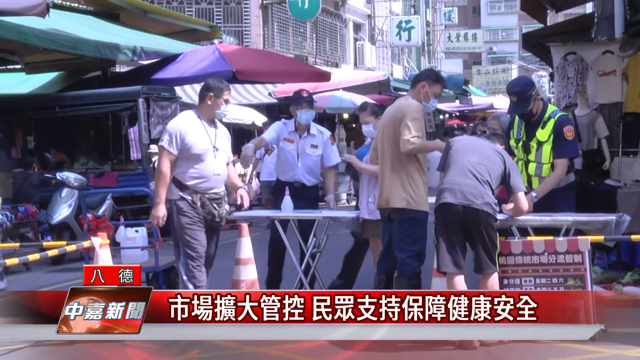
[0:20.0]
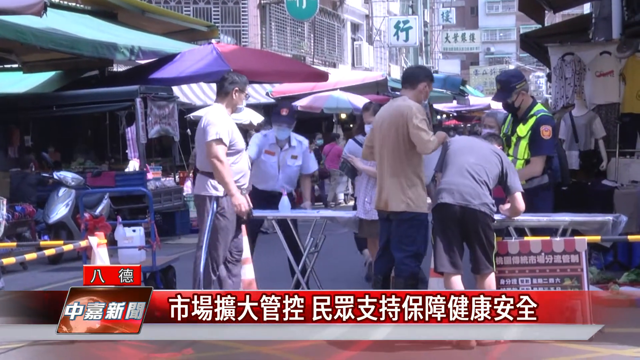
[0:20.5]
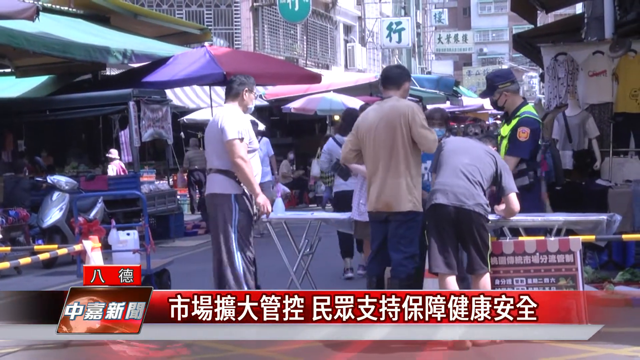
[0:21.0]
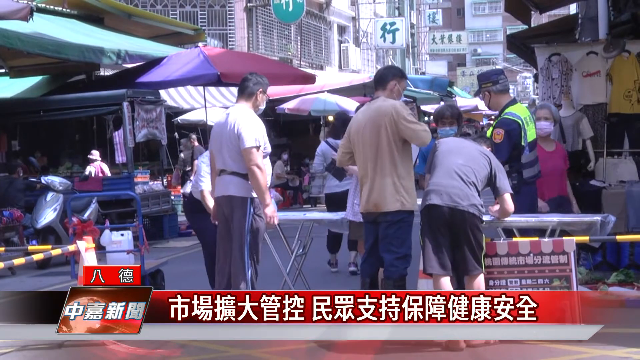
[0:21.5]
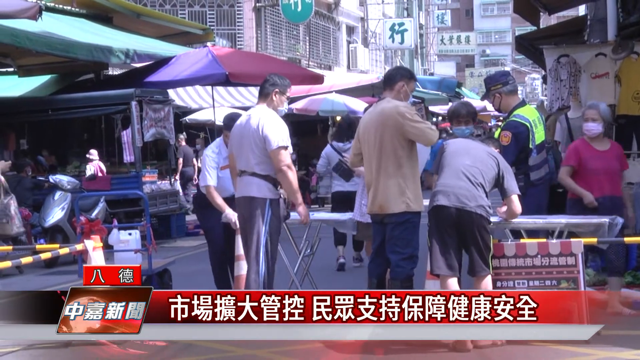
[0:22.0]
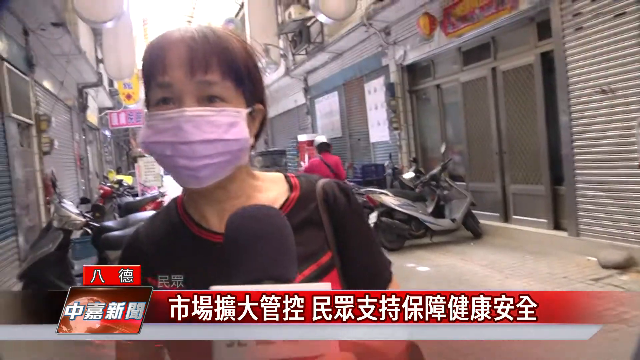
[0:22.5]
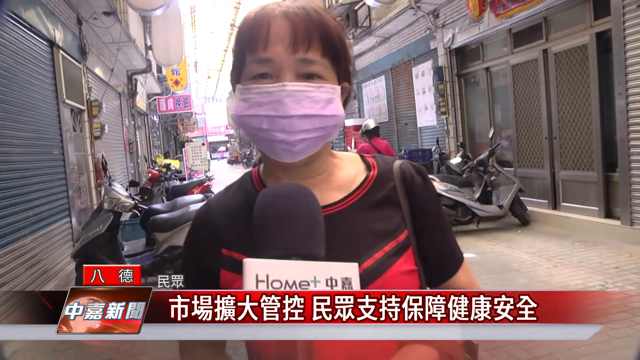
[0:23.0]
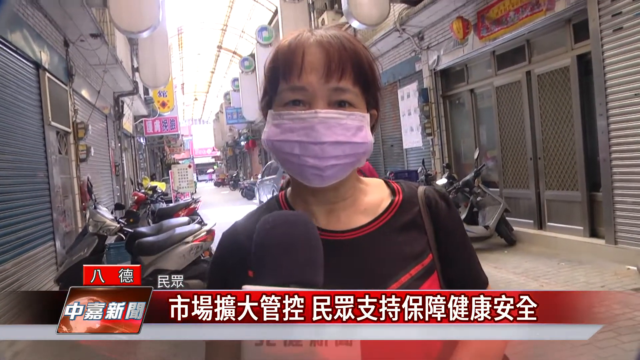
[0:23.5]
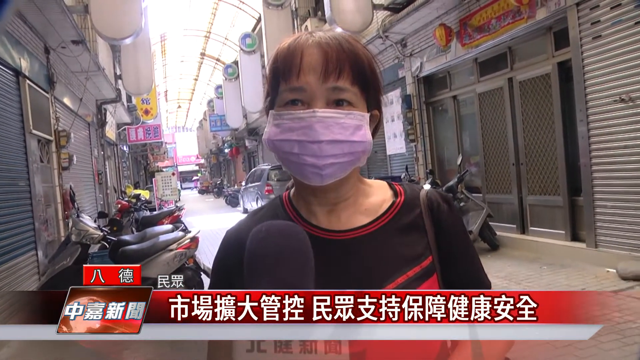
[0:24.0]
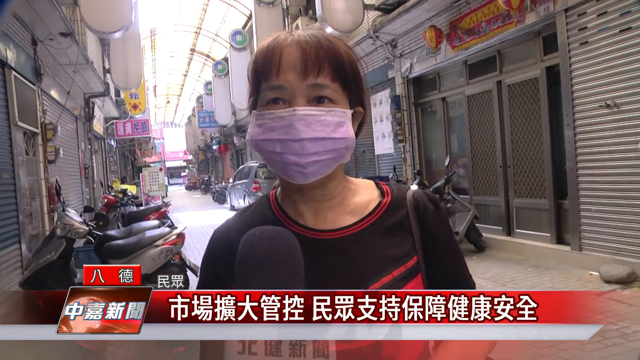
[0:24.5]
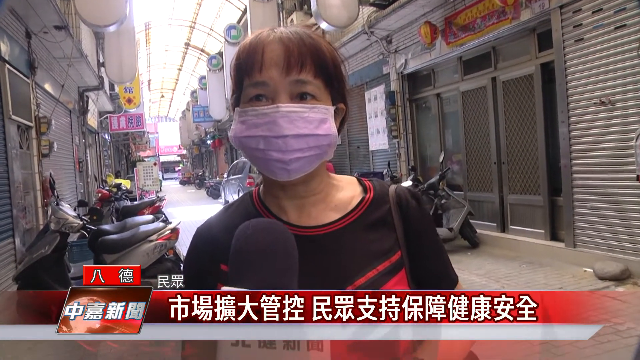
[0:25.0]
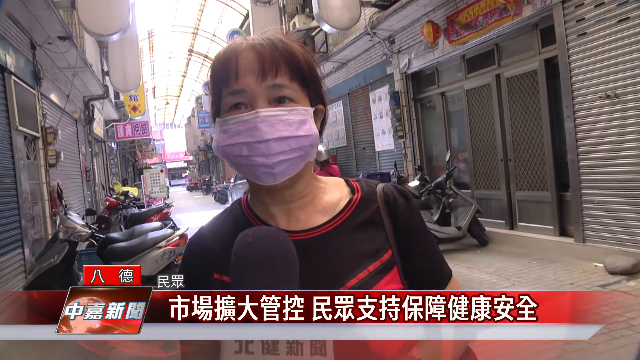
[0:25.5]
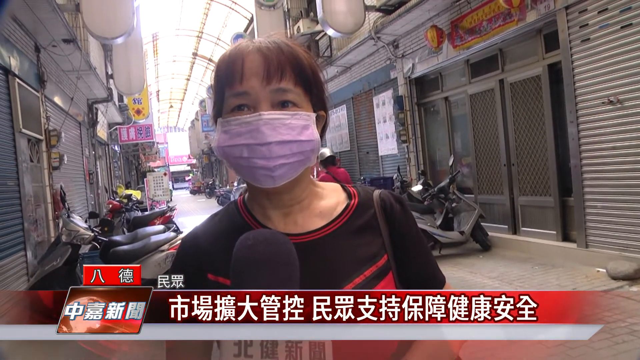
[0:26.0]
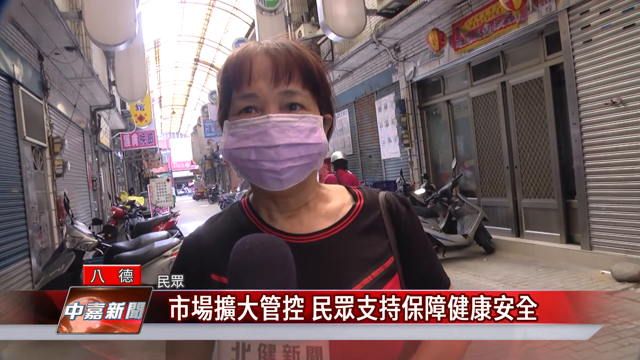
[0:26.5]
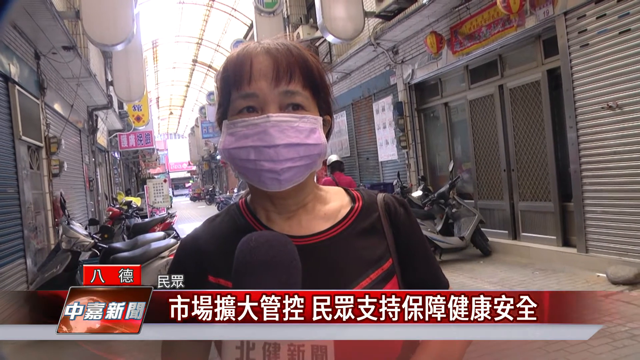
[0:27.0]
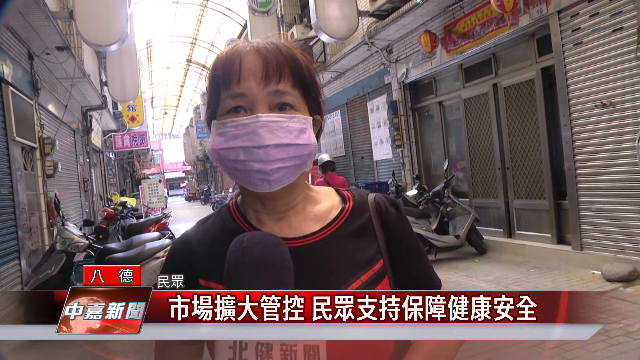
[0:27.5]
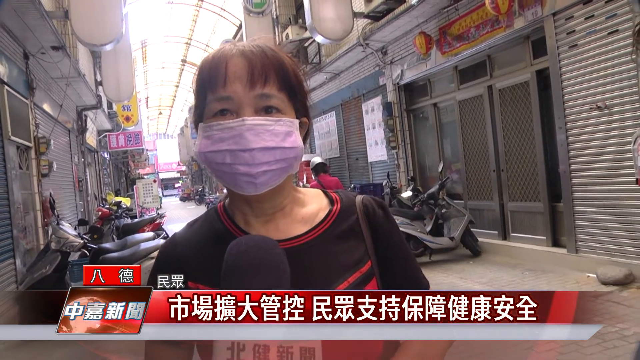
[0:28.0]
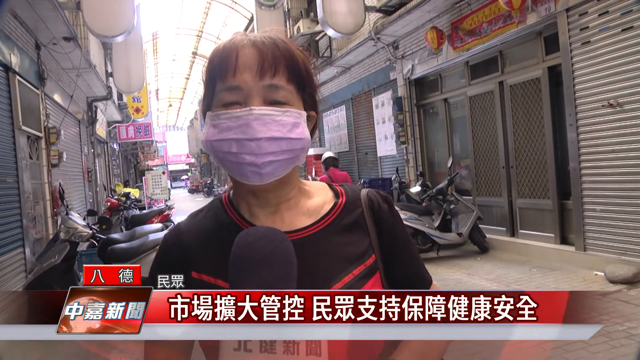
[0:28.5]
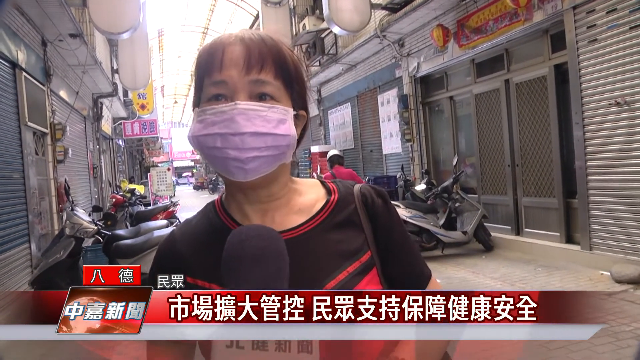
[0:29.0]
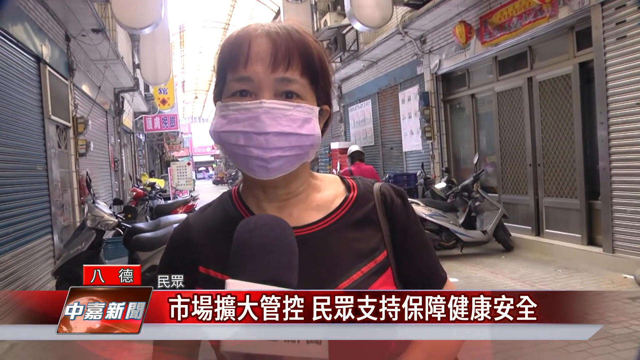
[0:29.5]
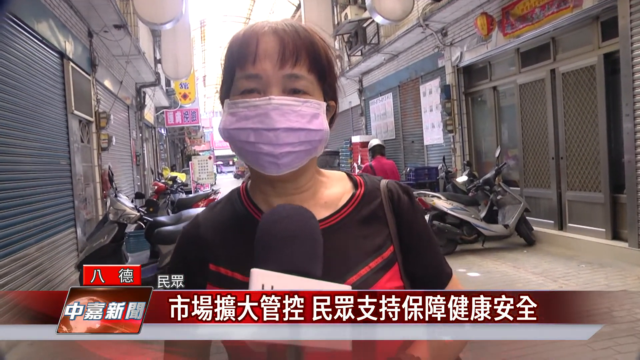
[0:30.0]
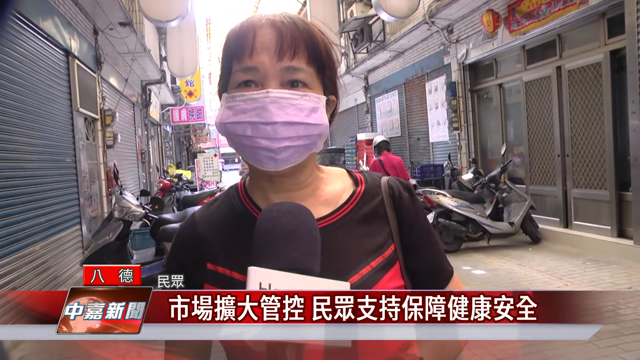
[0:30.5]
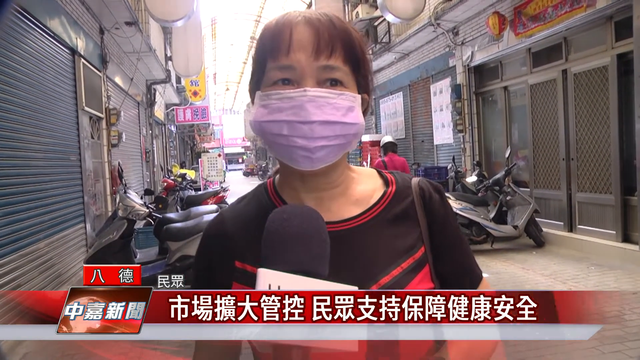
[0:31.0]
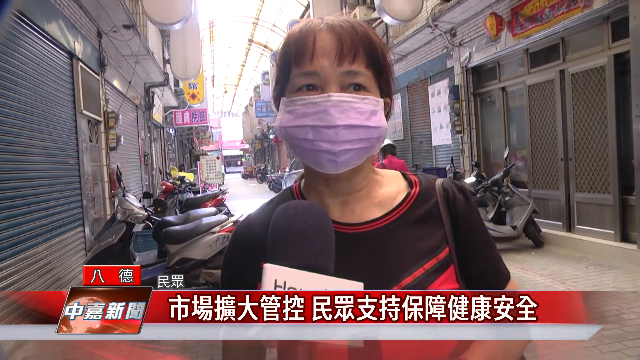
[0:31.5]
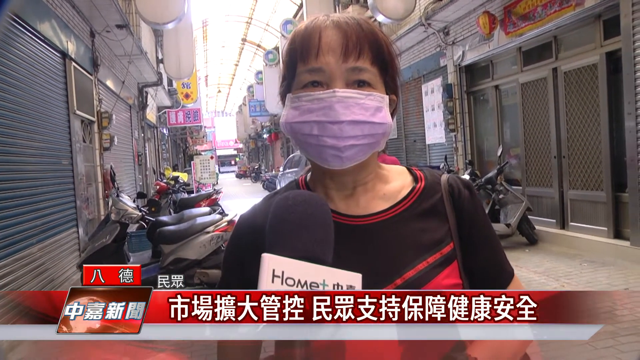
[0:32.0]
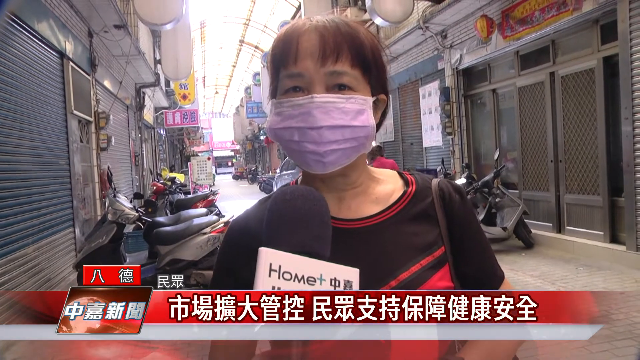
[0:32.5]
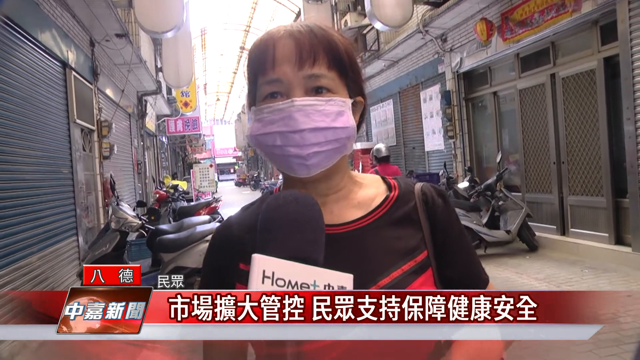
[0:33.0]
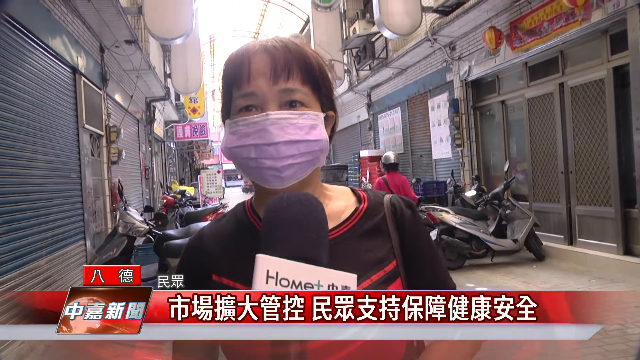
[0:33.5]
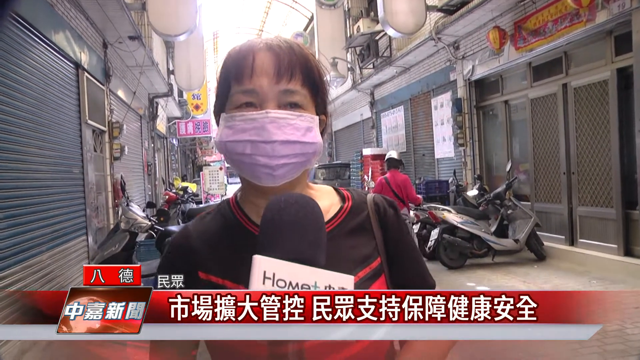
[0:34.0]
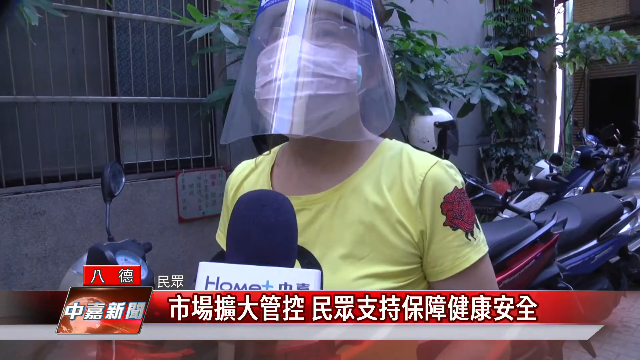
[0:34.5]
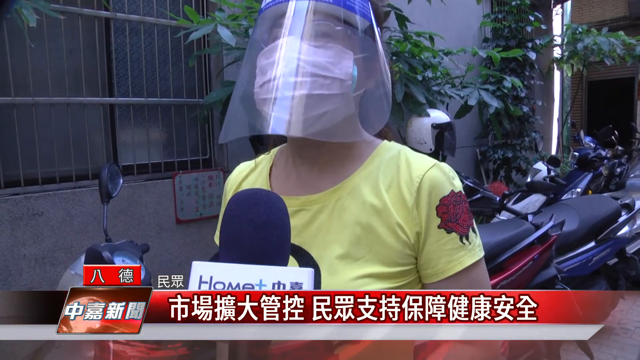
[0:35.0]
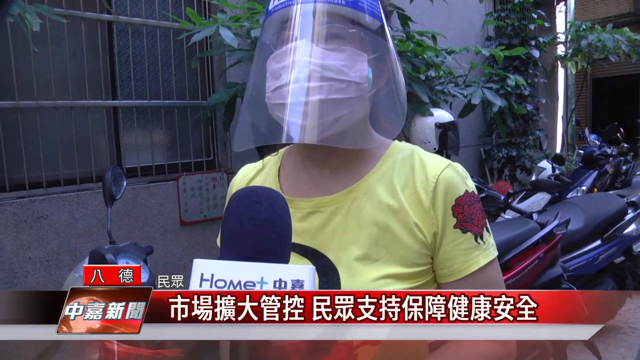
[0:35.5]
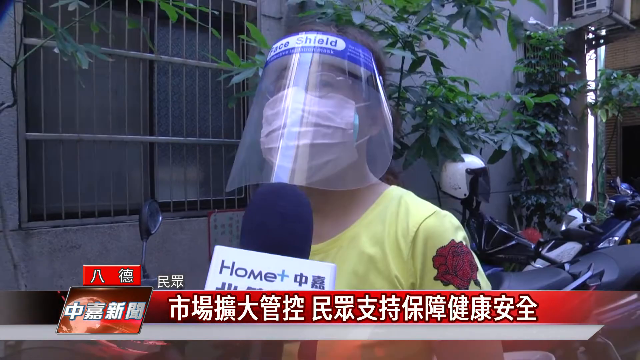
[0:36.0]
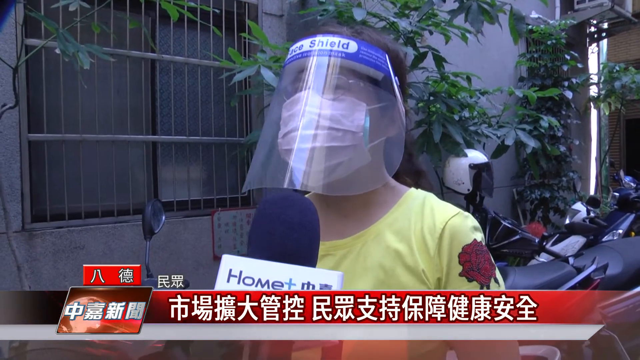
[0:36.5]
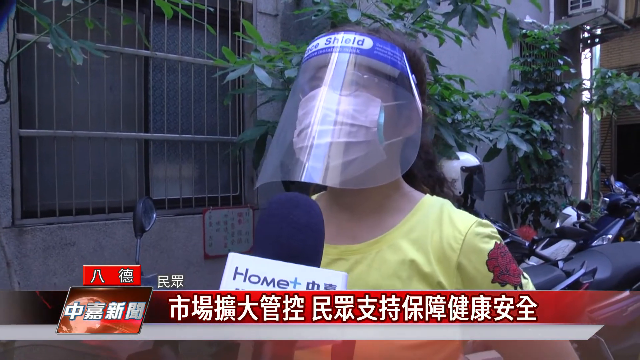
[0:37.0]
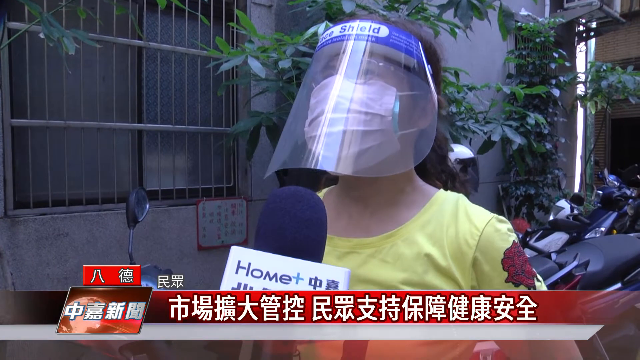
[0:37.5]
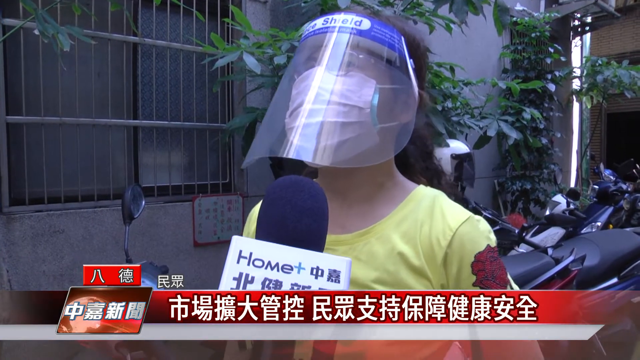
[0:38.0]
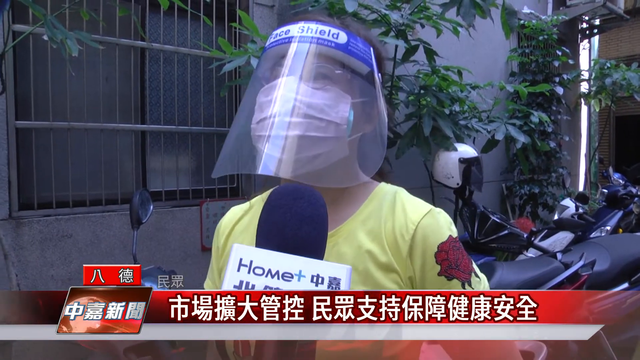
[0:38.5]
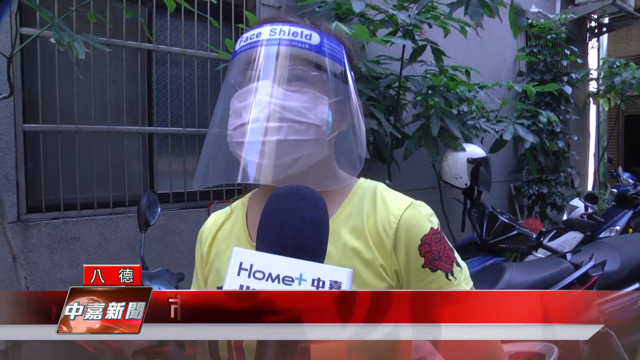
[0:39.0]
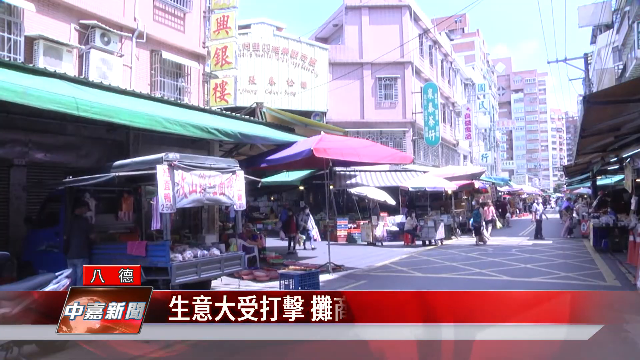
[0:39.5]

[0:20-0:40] This is possibly some sort of news B-roll. It opens with a shot of an open-air market where someone wearing a reflective safety vest appears to be working, with various people around the area. There appears to be caution tape, and someone appears to be unfurling what is possibly a stretcher. The video cuts to a woman wearing a purple mask and a red and black shirt who is being interviewed in what looks like a dingy market alleyway; the microphone is visible. A banner with red and white Asian characters runs along the bottom, possibly some sort of news banner. In a long shot of the woman, she wears a purse, and a bunch of moped scooters are behind her. The video then transitions to an interview with a woman in a yellow shirt with a rose on the shoulder, who wears a face shield, a pink mask and glasses. This possibly took place during COVID. The shot ends with more B-roll of the open-air market, showing fruits and vegetables and various signs hanging over the areas by the establishments.